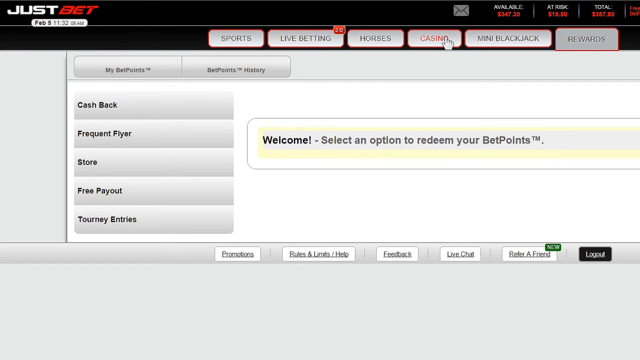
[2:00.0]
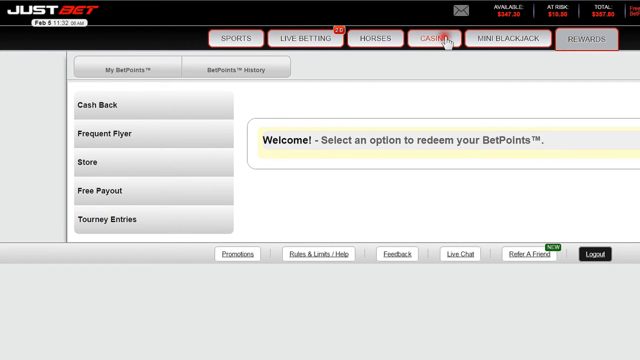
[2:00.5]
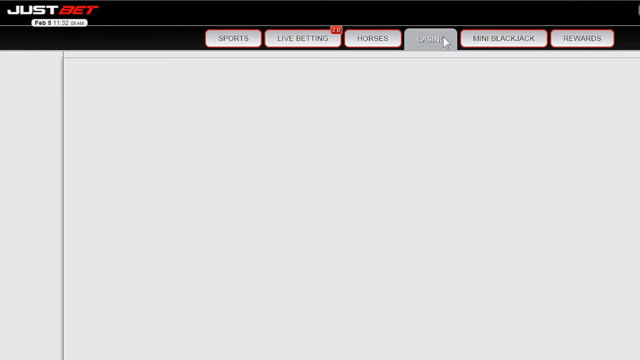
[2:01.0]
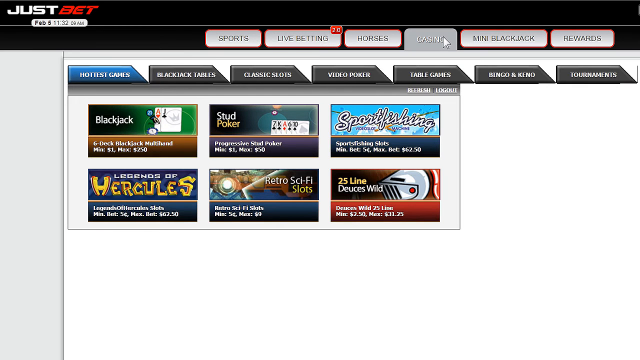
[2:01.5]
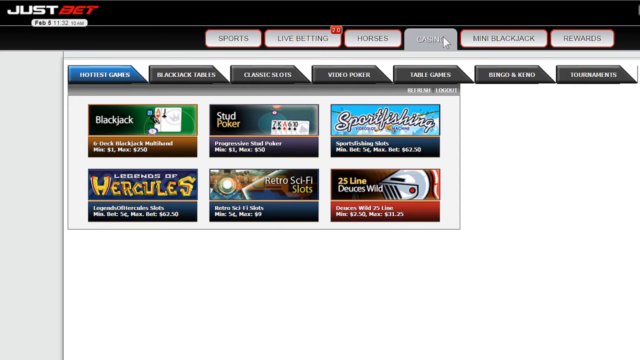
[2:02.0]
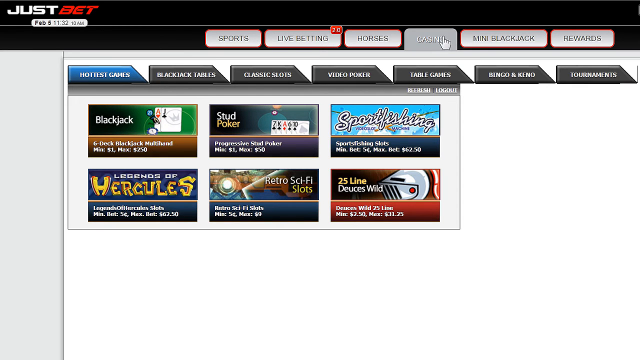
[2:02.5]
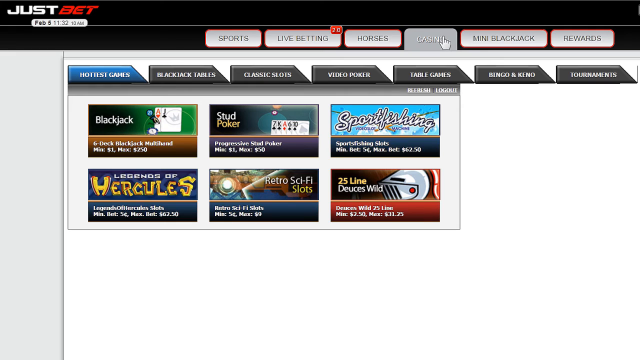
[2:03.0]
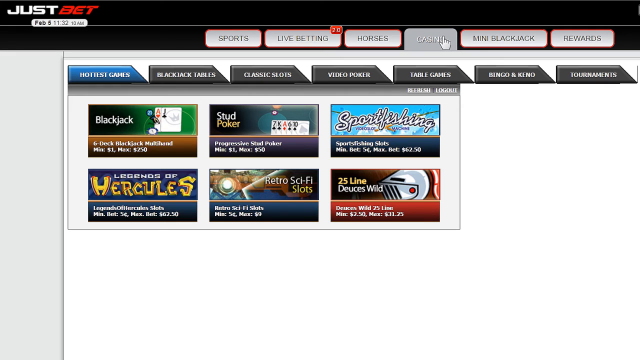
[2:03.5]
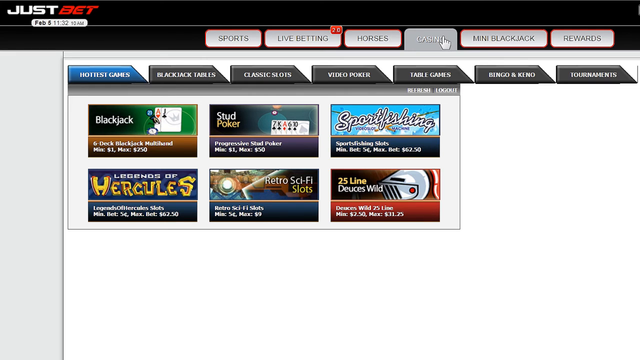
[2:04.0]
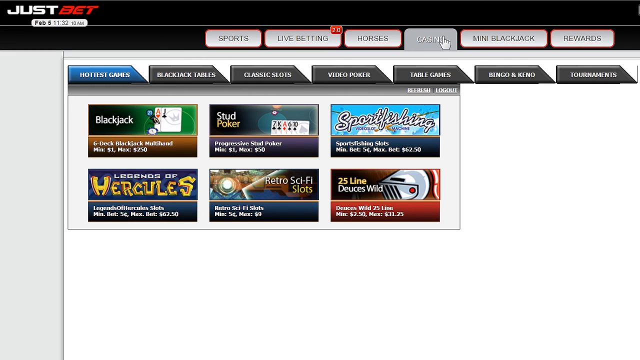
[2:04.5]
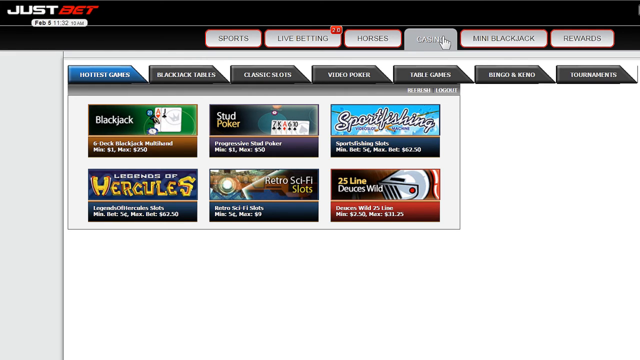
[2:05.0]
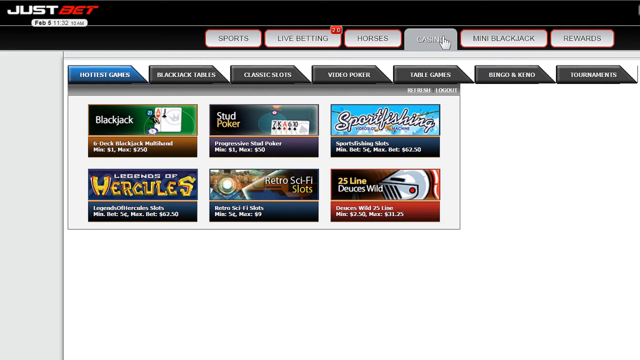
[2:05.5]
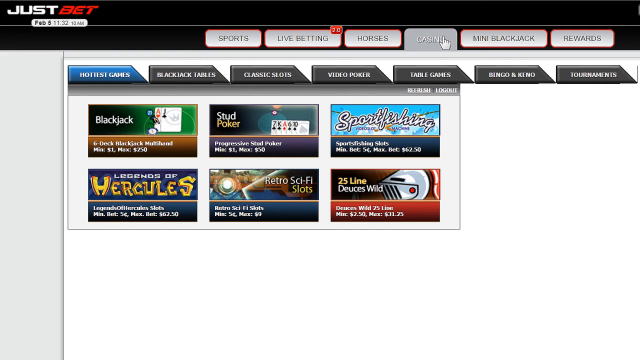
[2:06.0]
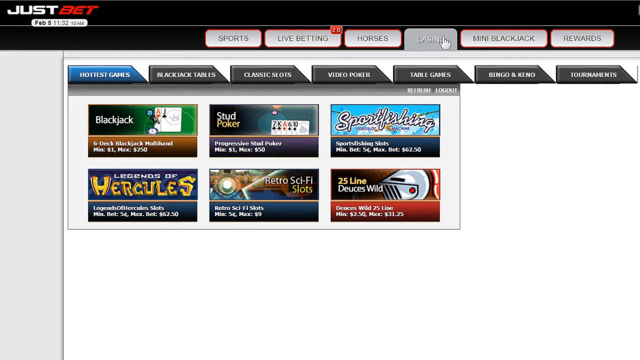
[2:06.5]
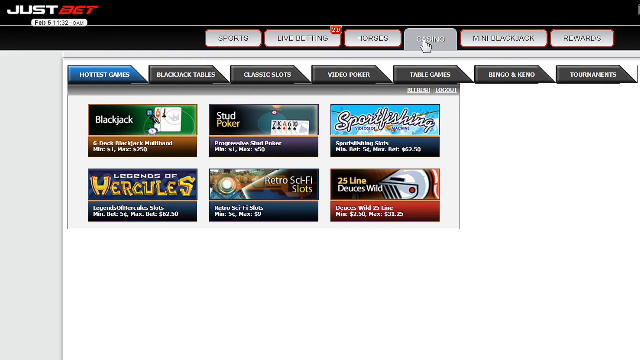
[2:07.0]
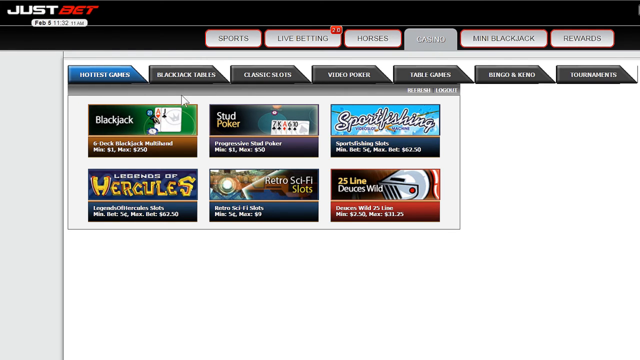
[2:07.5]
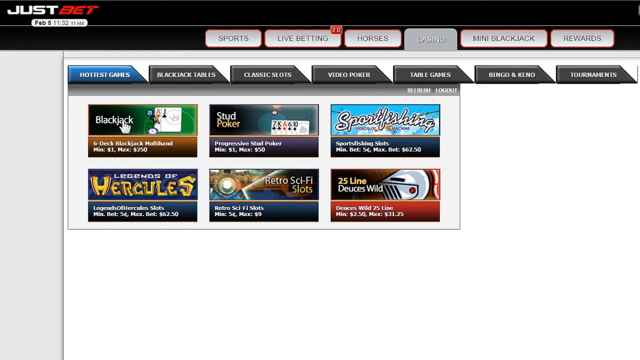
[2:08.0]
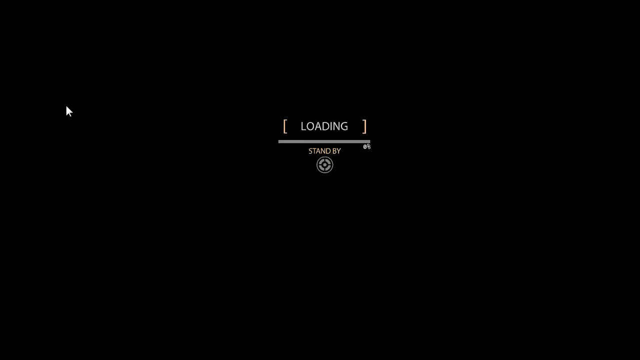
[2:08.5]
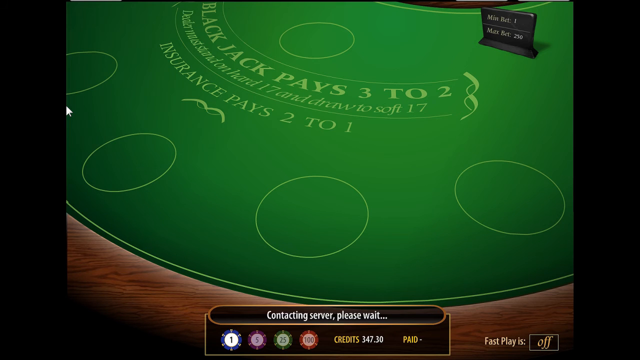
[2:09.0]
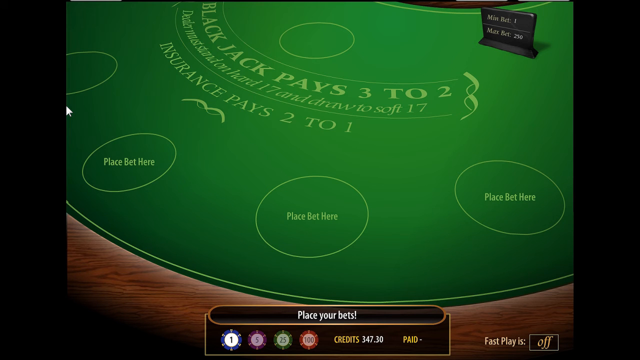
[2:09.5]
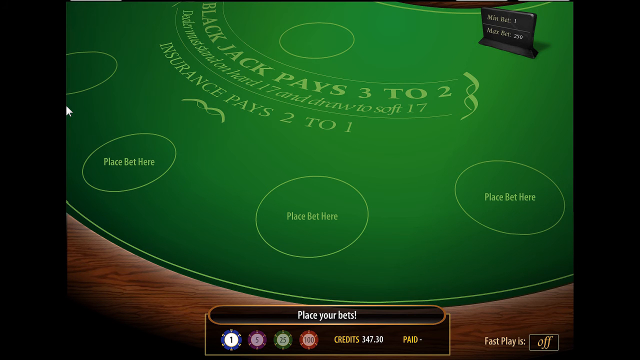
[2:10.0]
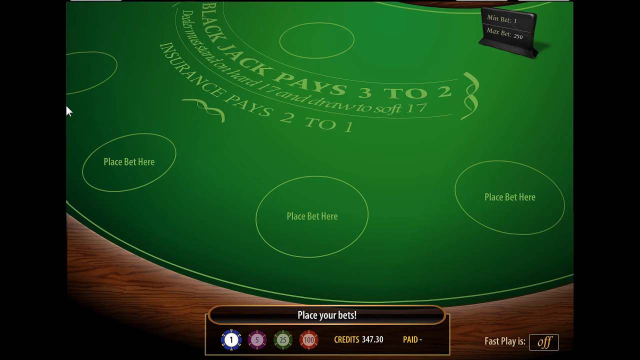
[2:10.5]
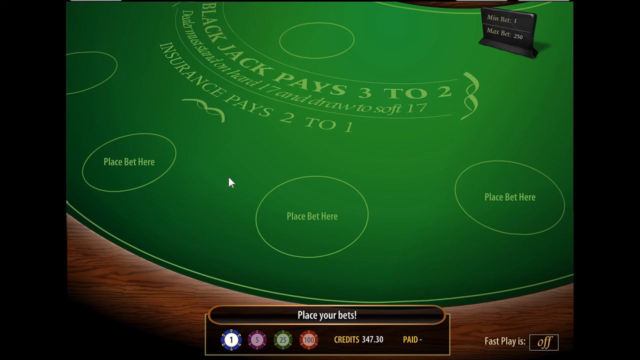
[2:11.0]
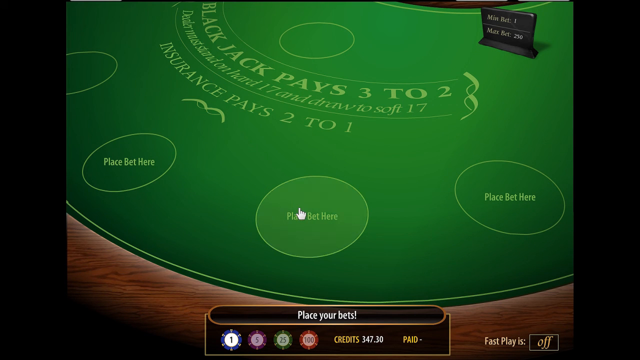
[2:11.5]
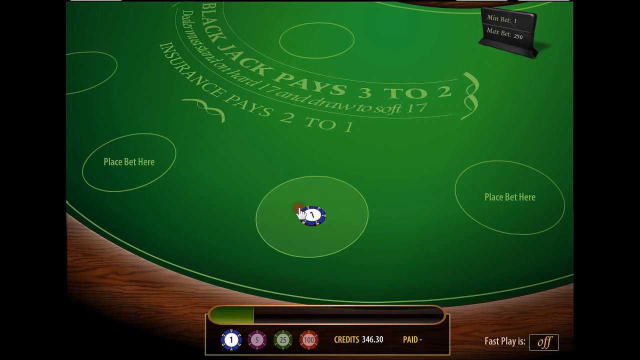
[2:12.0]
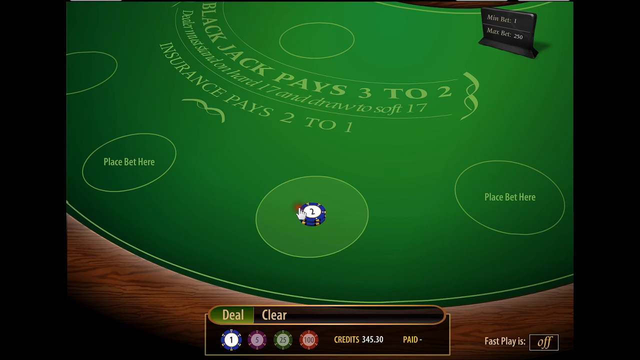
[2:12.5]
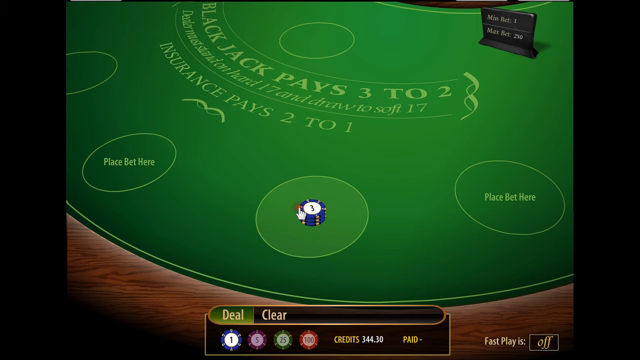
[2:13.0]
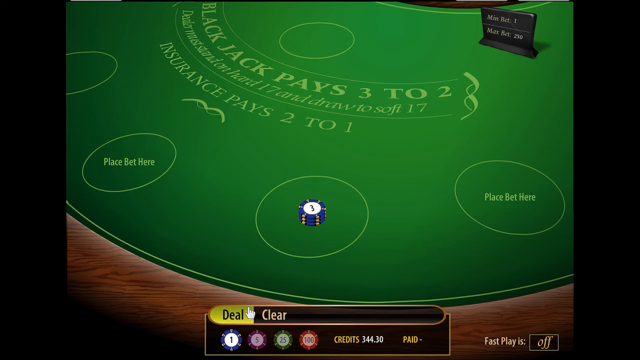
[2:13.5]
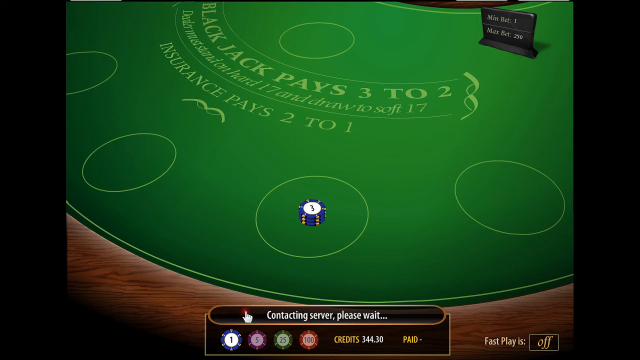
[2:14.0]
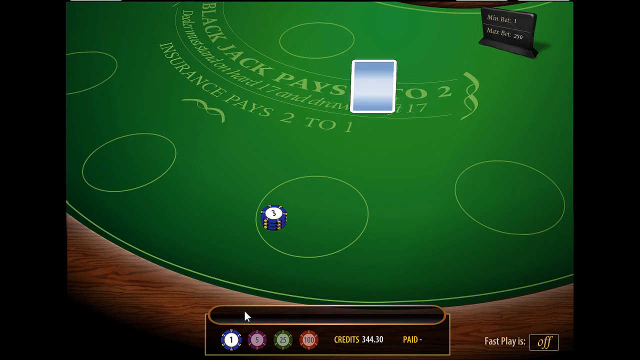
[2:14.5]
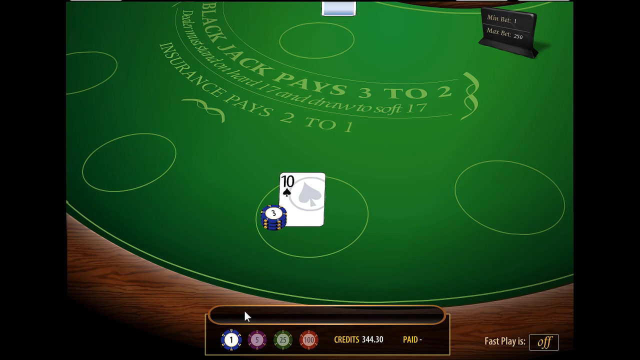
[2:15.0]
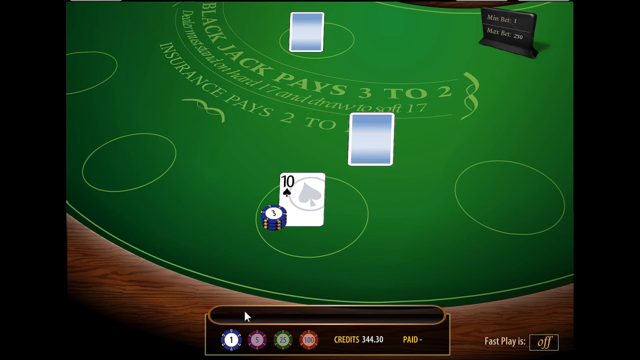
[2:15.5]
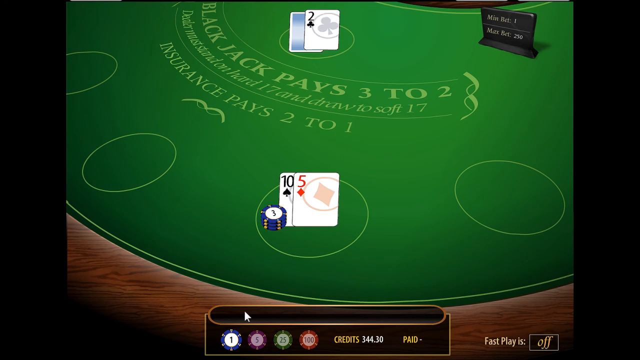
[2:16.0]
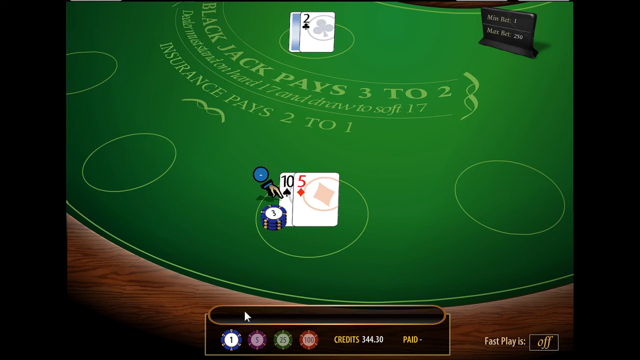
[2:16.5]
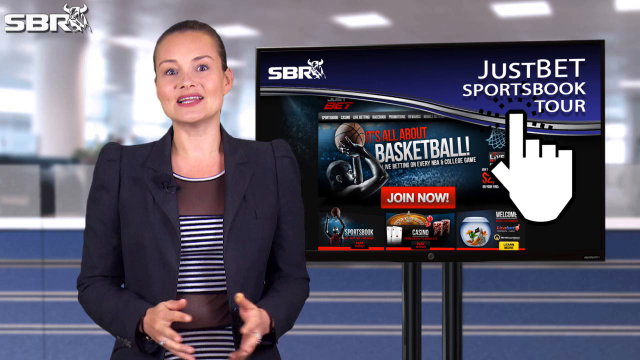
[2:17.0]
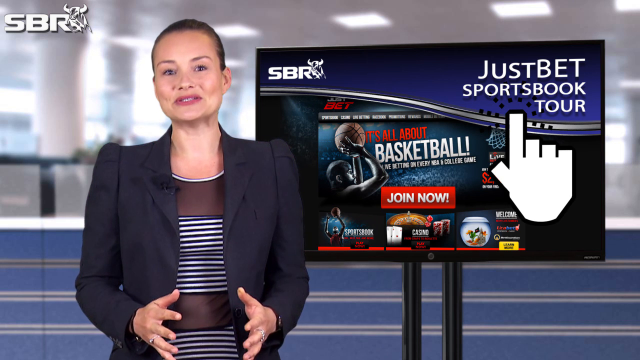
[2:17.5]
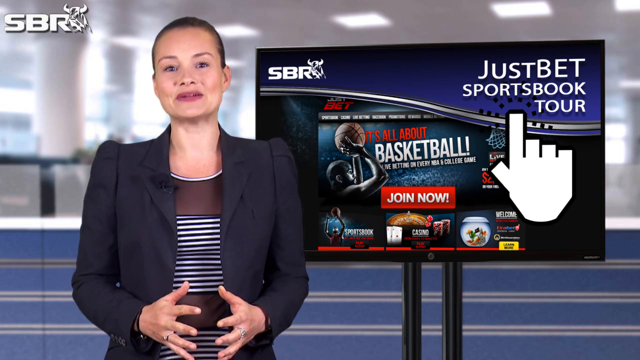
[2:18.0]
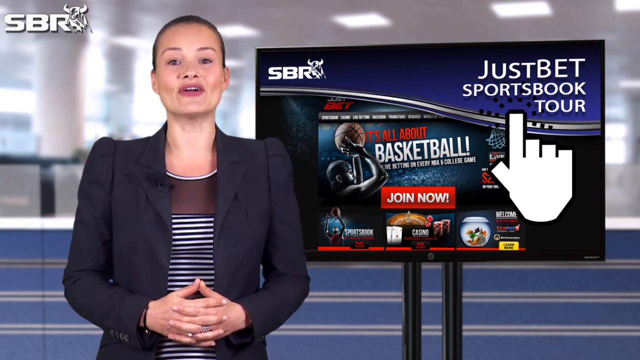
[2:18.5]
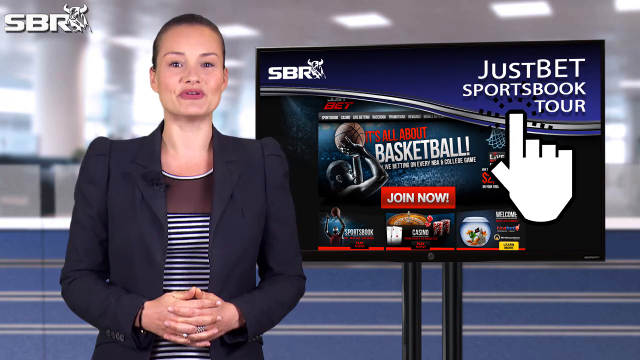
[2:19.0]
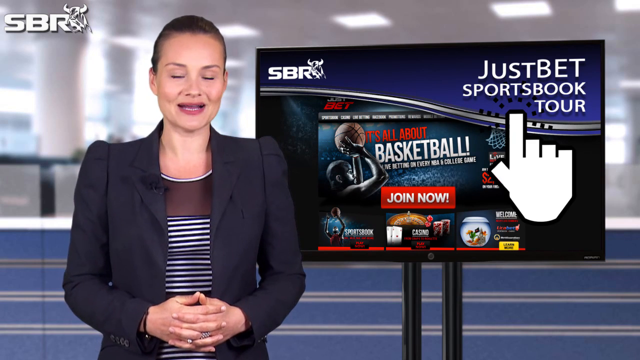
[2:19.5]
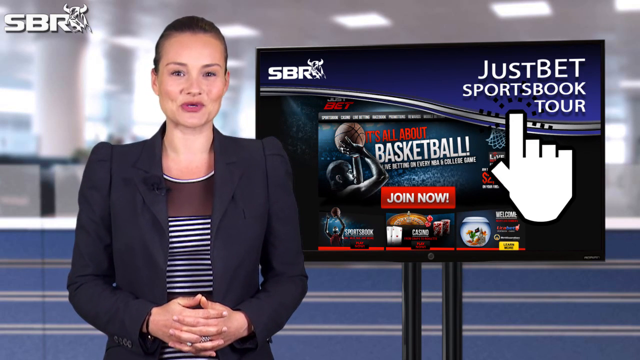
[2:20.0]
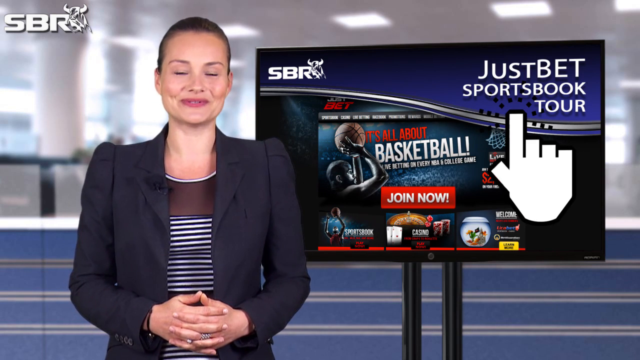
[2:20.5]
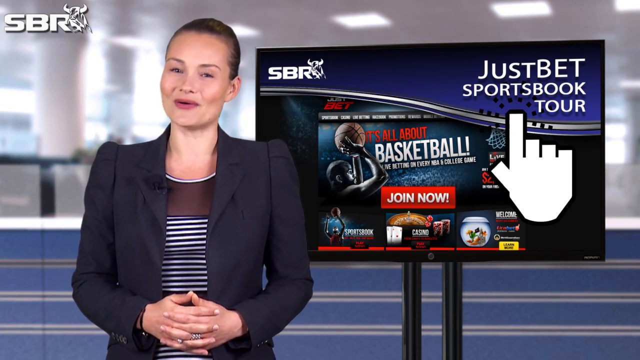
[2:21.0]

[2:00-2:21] On a live website, the cursor moves around and clicks blackjack, bringing up a large blackjack table. The cursor clicks where it says "place bet here," chips appear, and cards come down, including a 10 and a 5. A woman then speaks with a monitor behind her showing the website; she is to the left of it and is cupping her hands. Many options are shown on the screen. The cursor clicks a circle that says "place bet here." At the very top of the website there is live betting with a red circle containing a number. Text reads "welcome select an option to redeem your bet points," and there is a "refer a friend" label with "new" in green.